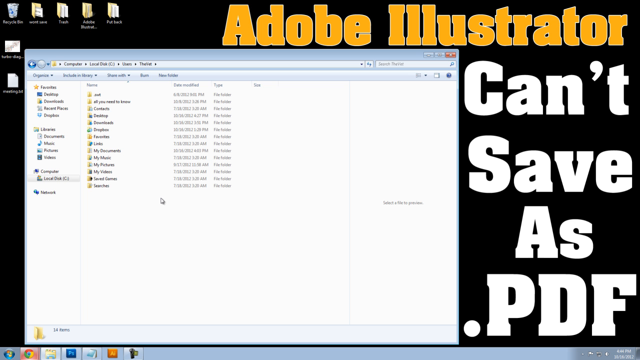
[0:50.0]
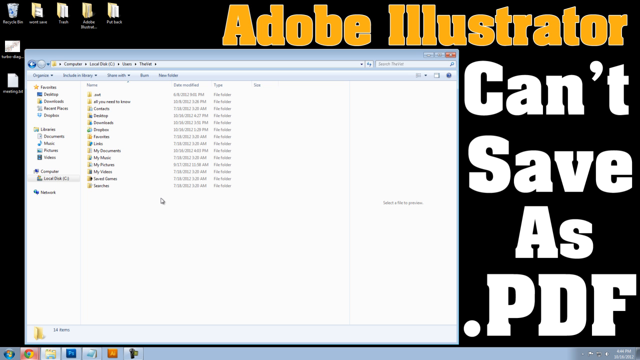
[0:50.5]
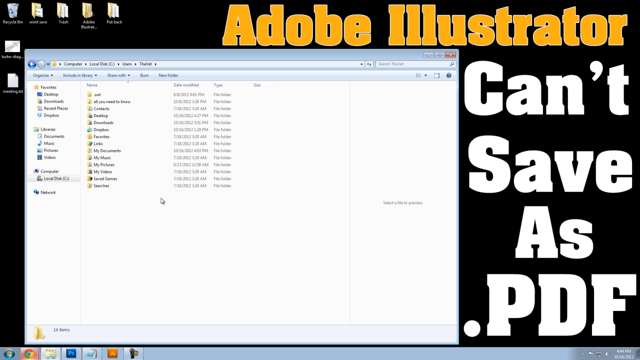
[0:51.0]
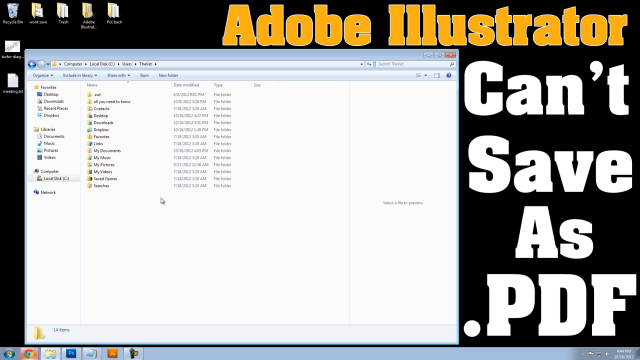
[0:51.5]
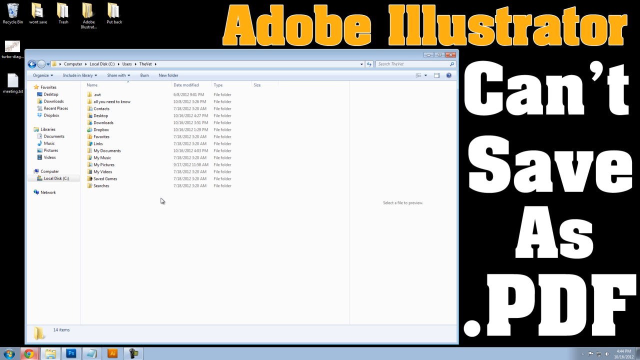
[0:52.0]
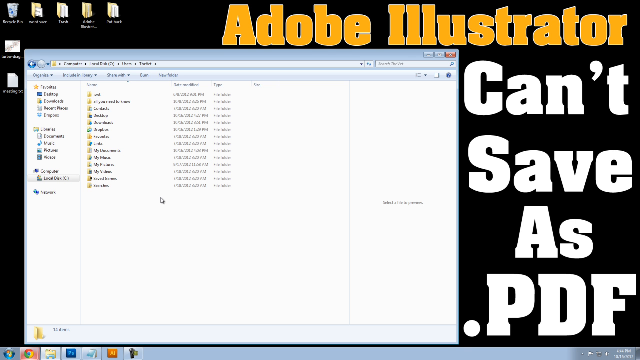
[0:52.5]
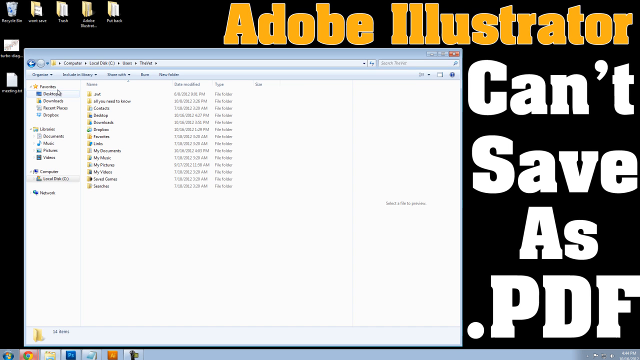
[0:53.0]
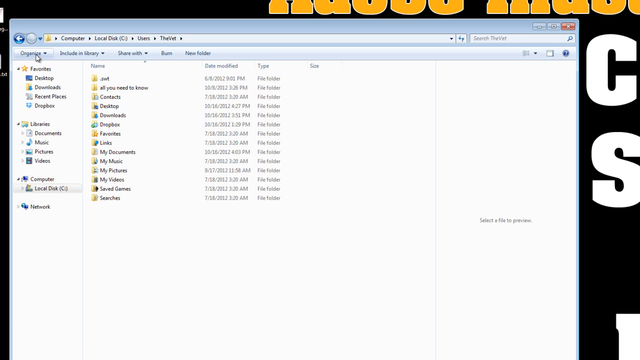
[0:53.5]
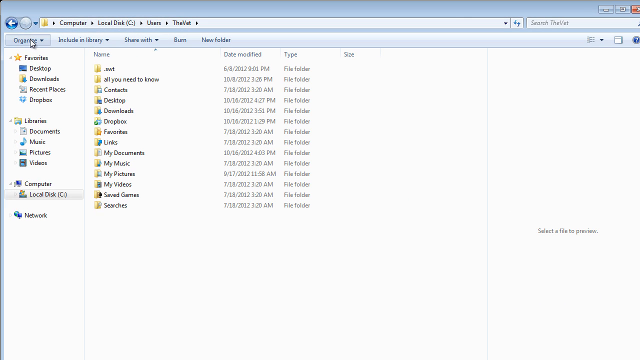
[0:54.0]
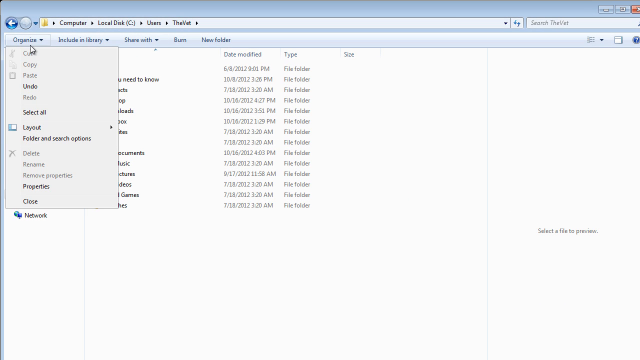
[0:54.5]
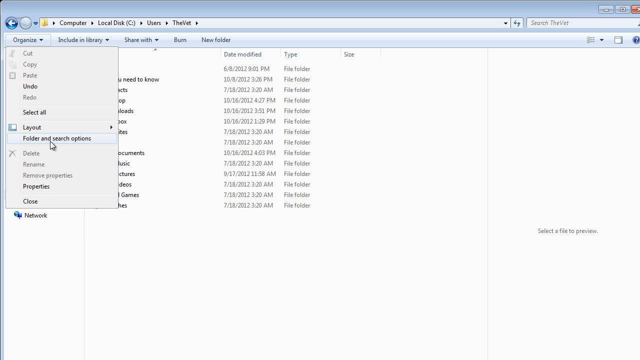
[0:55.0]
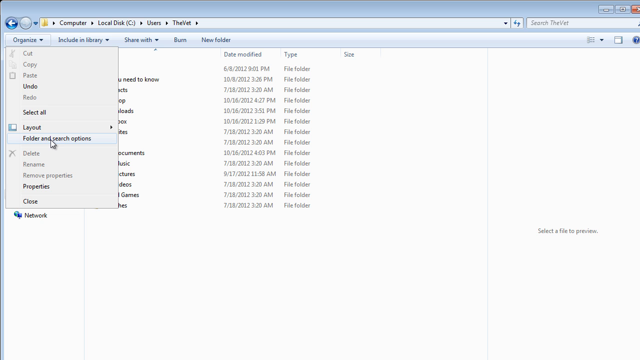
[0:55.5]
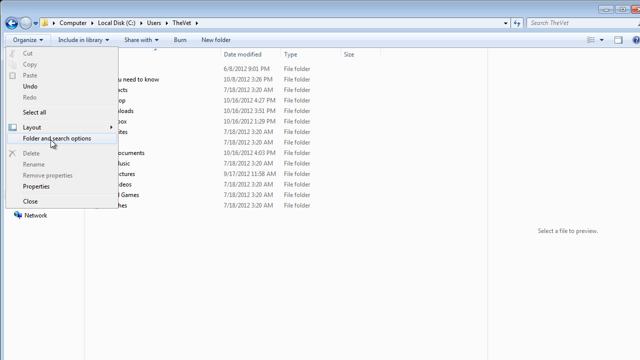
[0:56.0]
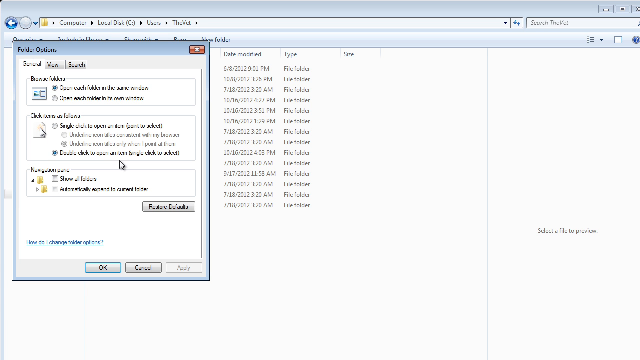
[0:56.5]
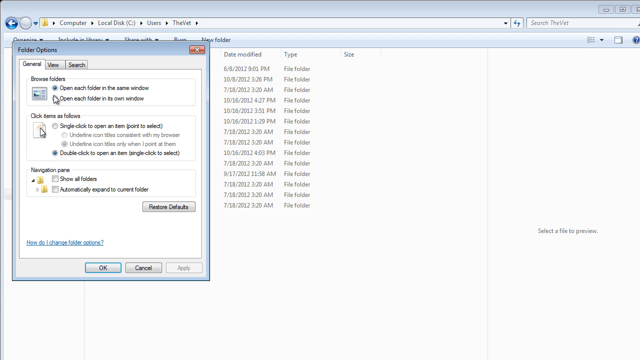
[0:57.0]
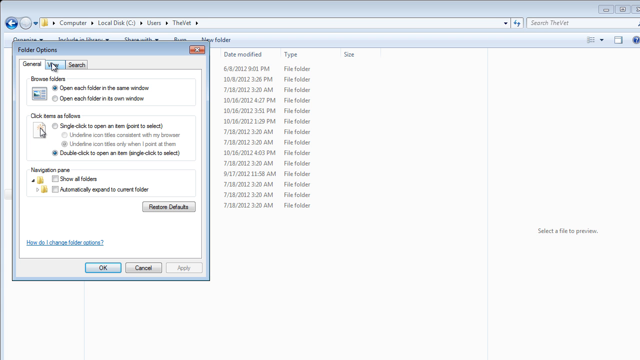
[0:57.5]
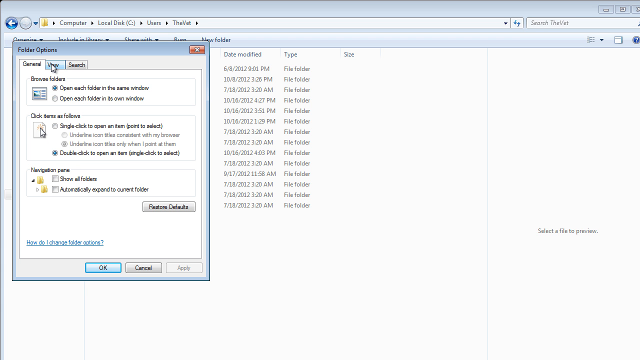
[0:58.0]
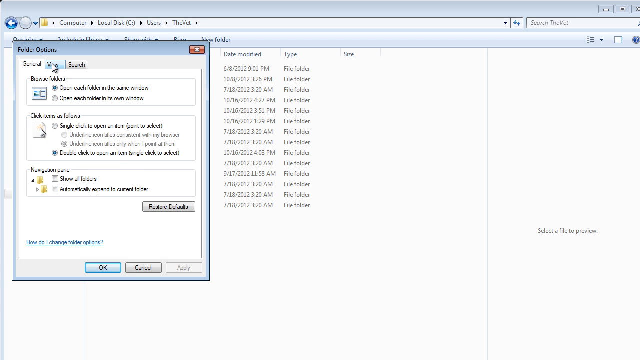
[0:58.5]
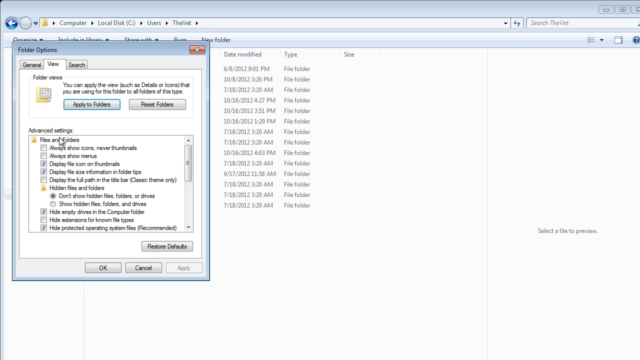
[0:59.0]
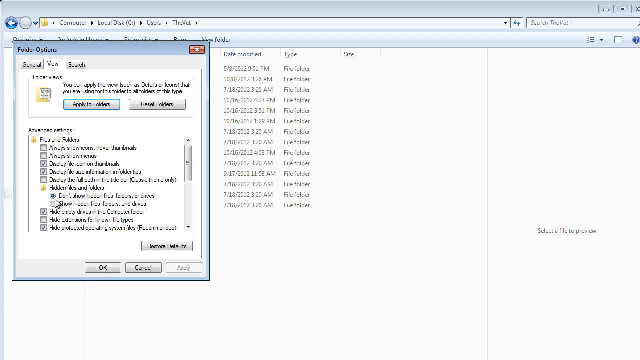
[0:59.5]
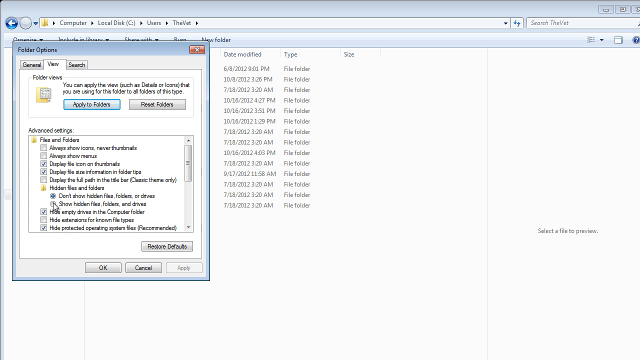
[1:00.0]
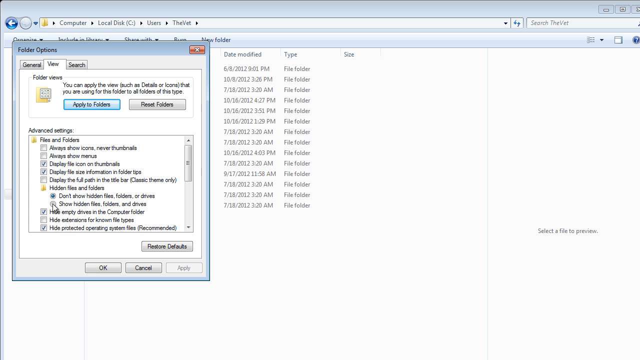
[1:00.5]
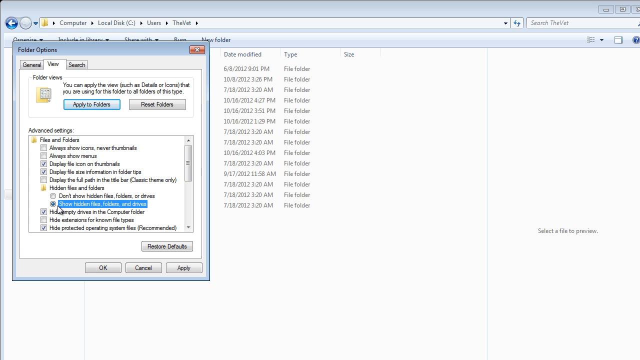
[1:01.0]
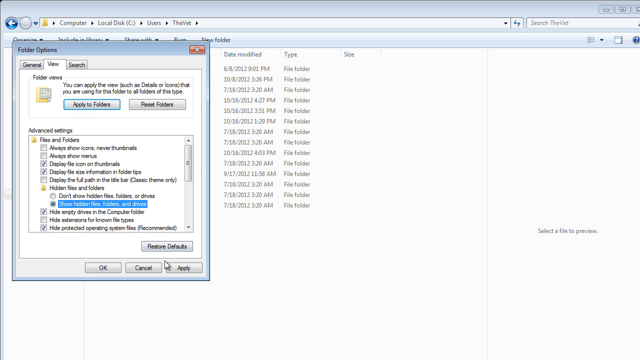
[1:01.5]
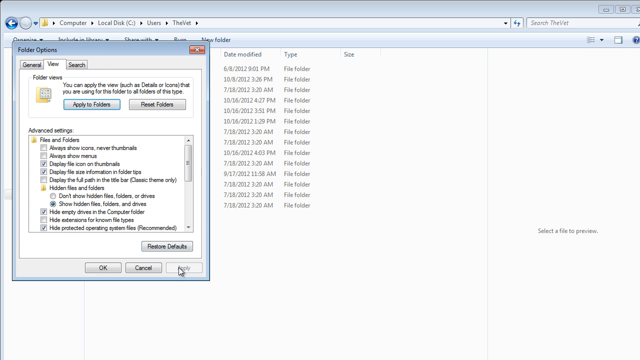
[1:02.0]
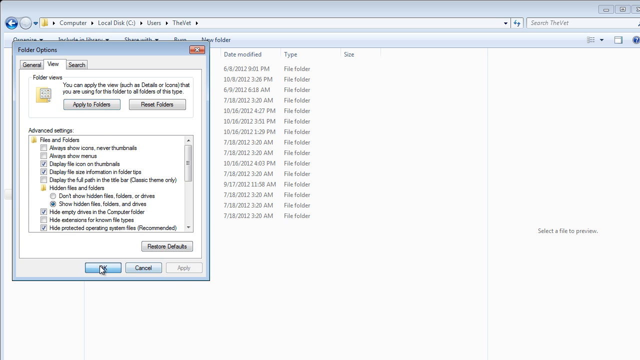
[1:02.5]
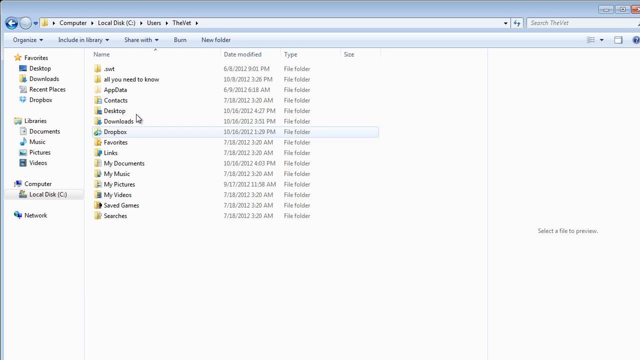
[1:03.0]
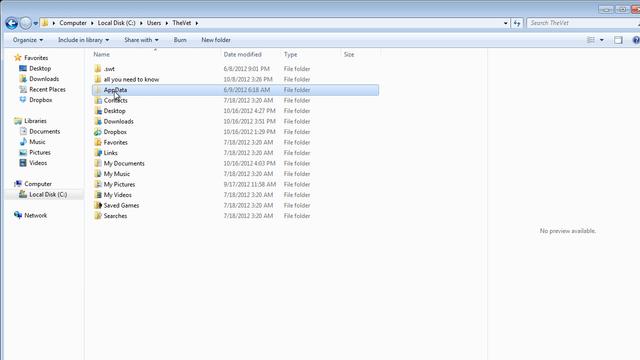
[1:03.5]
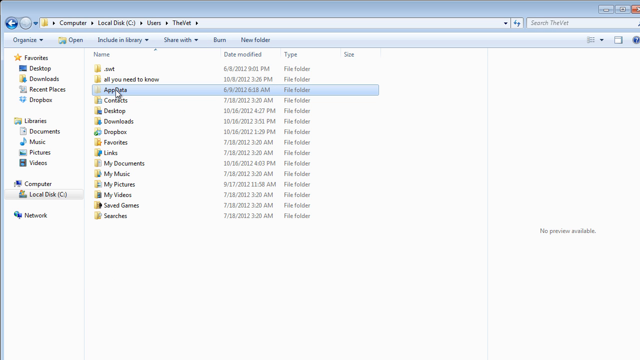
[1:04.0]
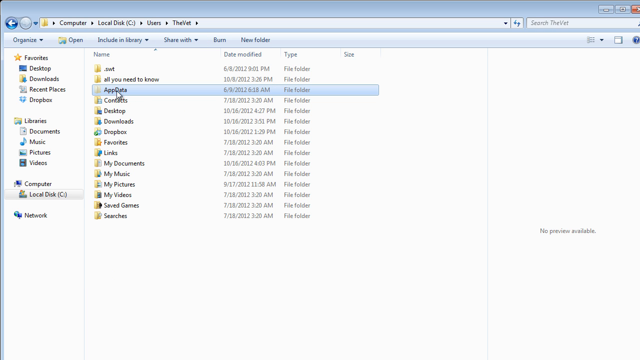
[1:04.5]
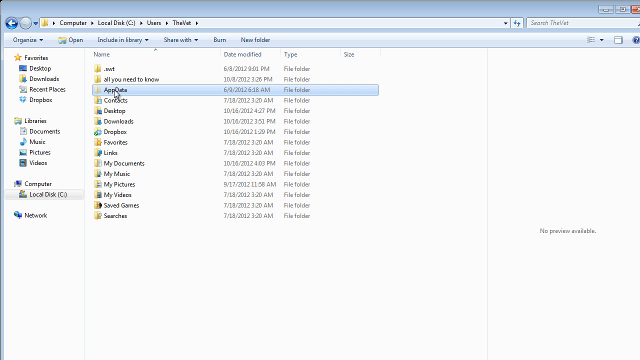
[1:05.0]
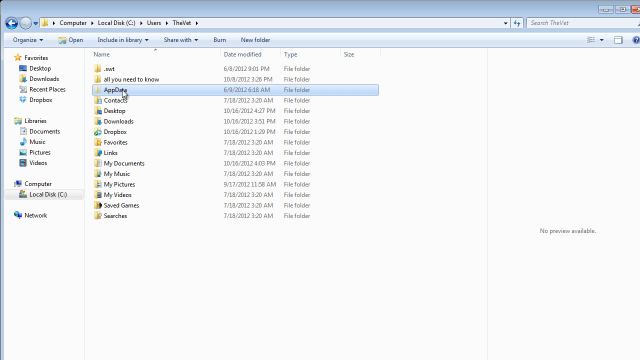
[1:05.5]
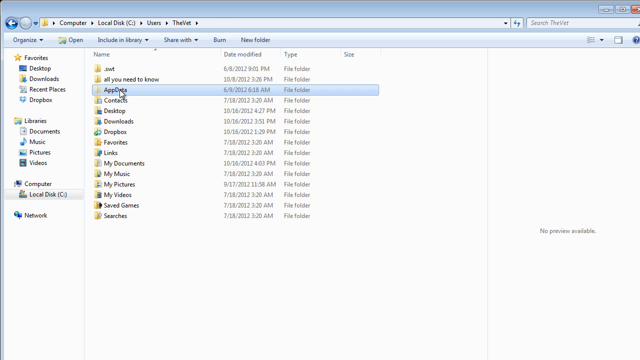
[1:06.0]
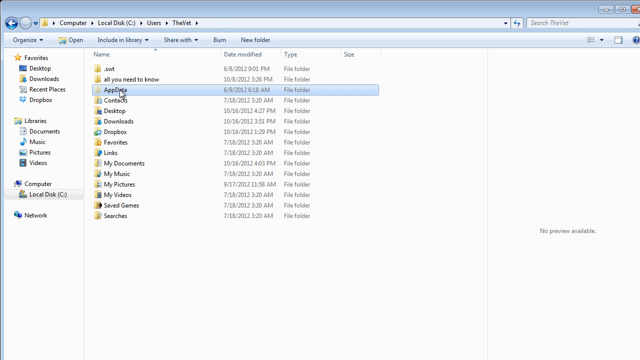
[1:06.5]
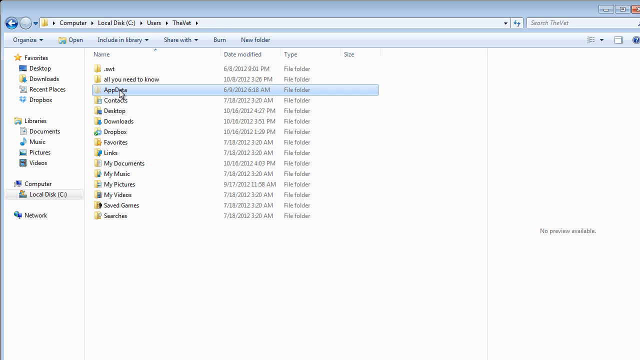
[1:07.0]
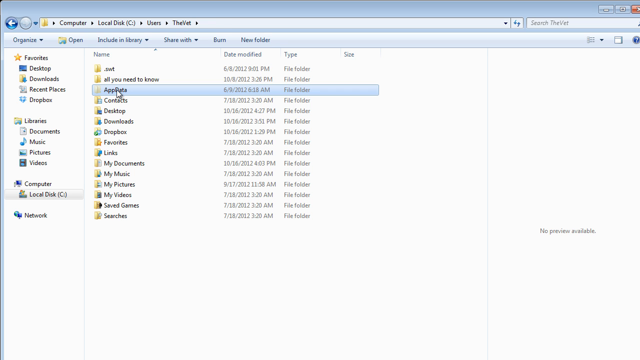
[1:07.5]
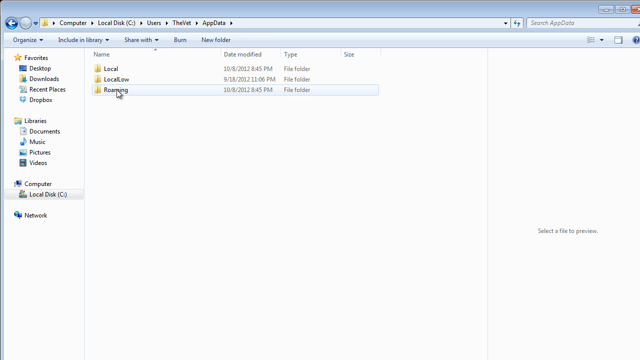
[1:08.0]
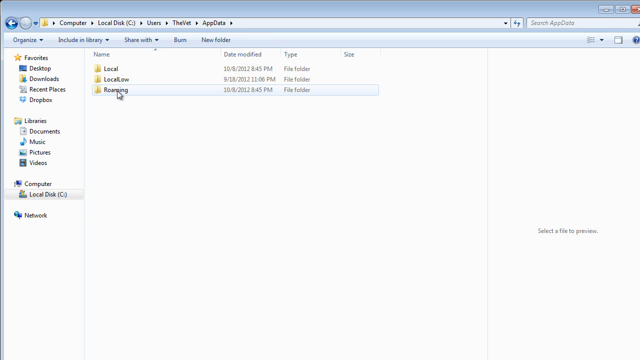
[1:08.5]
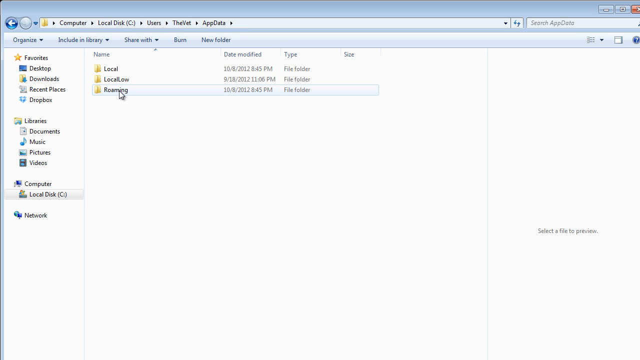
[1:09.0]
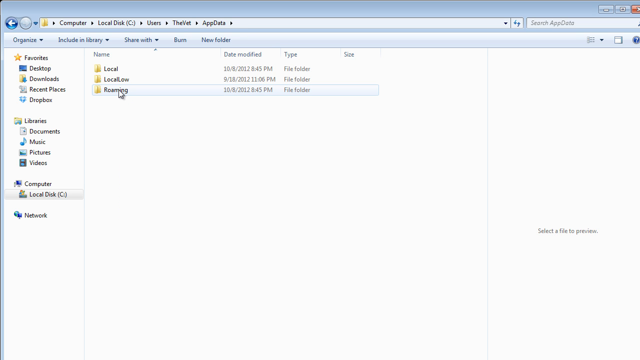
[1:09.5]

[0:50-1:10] A window is open showing files and folders. The view zooms a little as the user chooses a command, chooses a tab within folder options, chooses a radio button from the menu that appears and clicks apply. He goes to a folder called app data, clicks into it, then clicks into another folder apparently called roaming, and the view jumps back out to the original window. He seems to be configuring the computer or the app in some way.